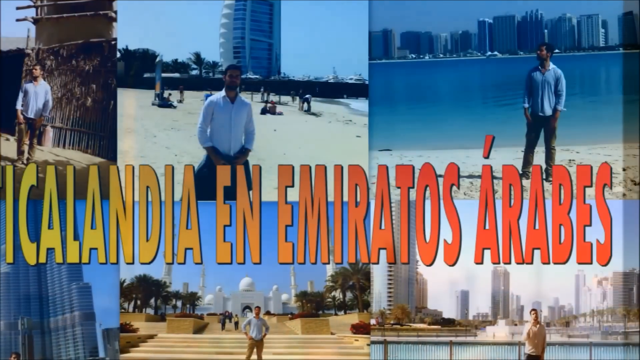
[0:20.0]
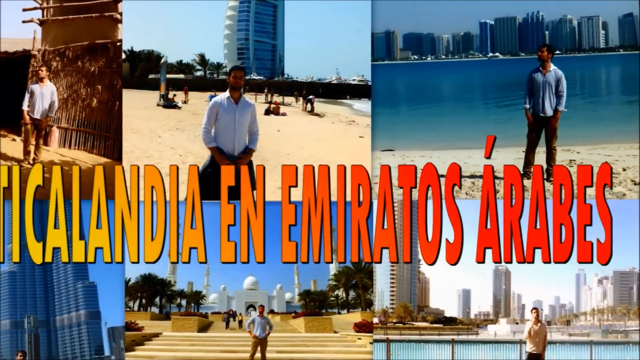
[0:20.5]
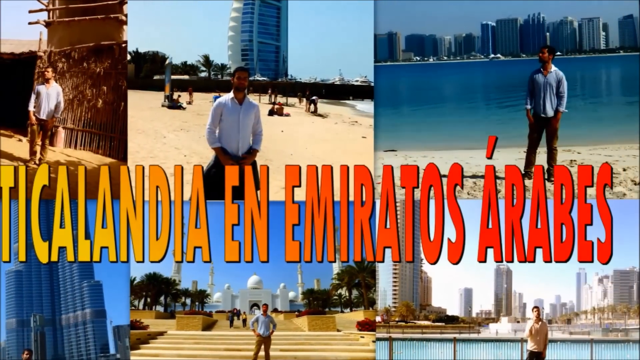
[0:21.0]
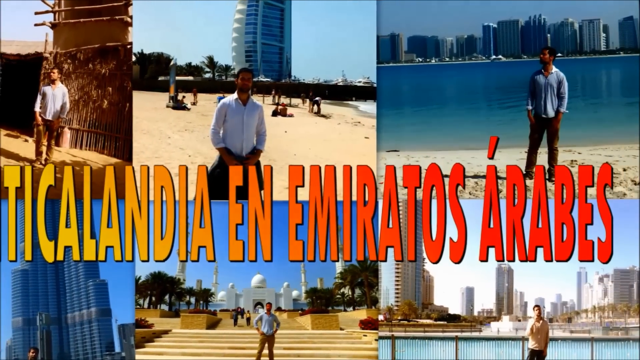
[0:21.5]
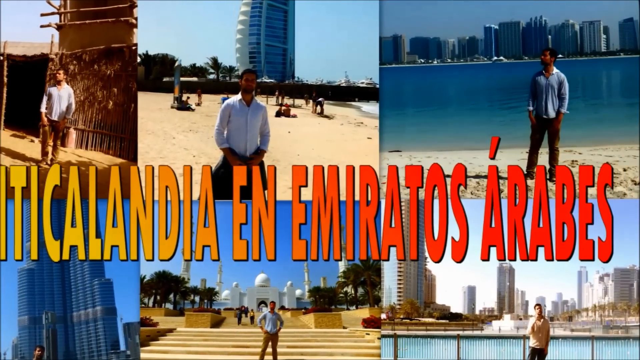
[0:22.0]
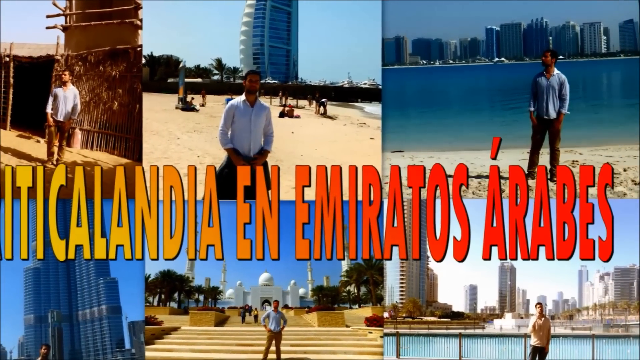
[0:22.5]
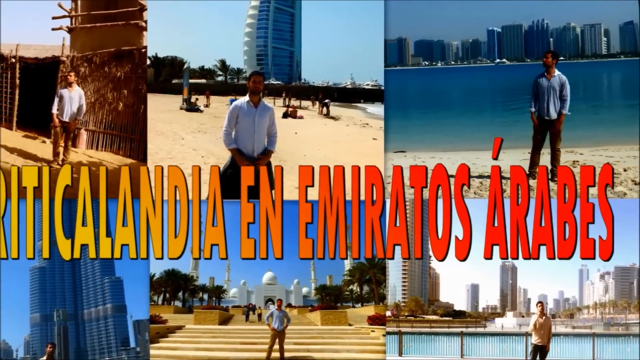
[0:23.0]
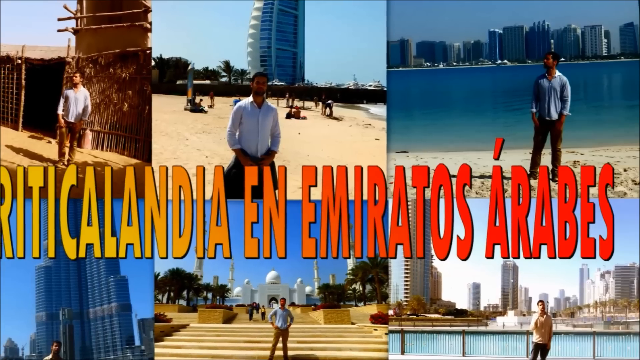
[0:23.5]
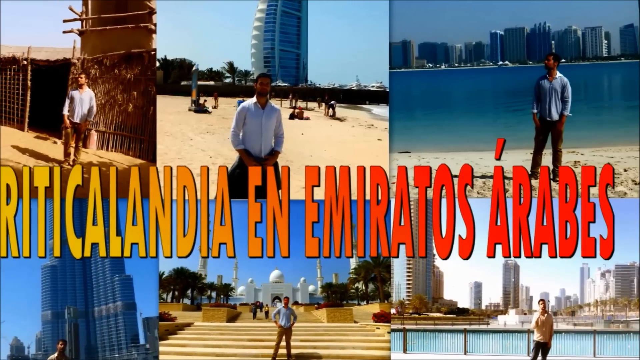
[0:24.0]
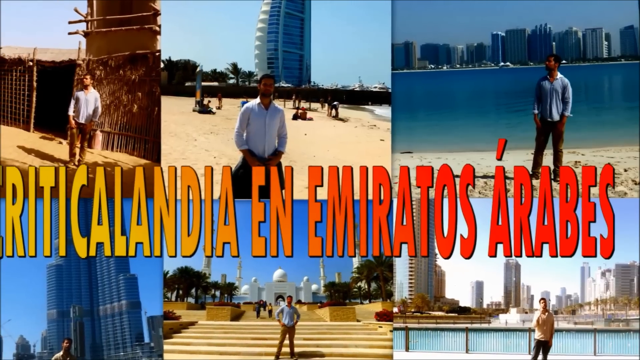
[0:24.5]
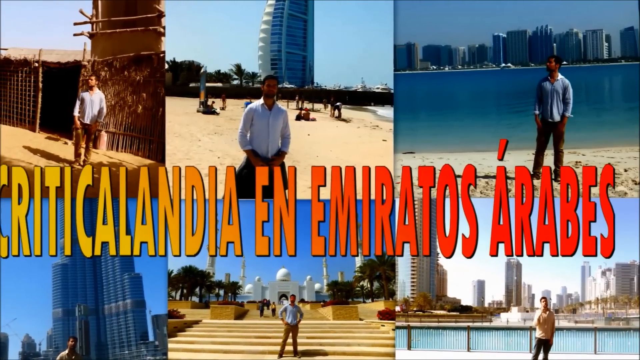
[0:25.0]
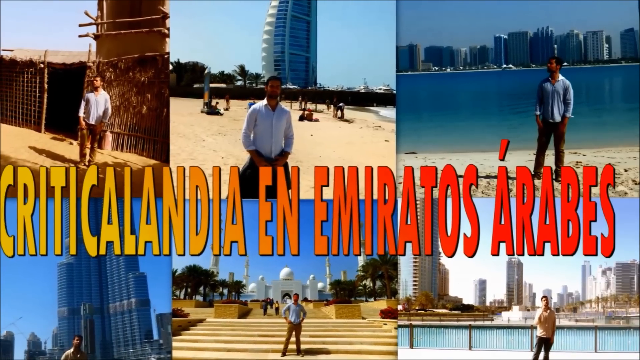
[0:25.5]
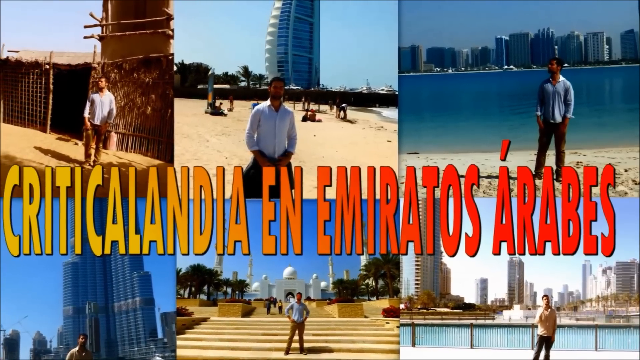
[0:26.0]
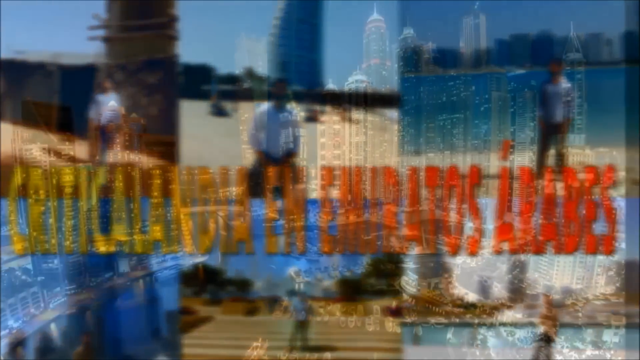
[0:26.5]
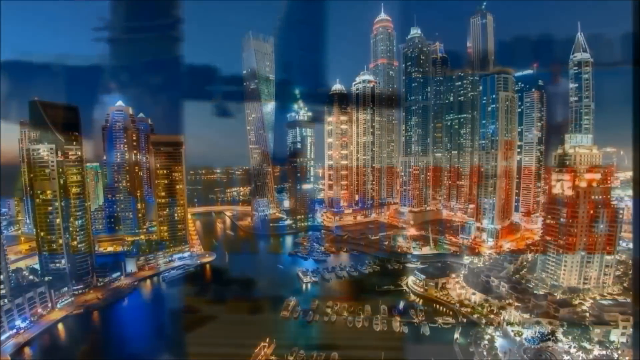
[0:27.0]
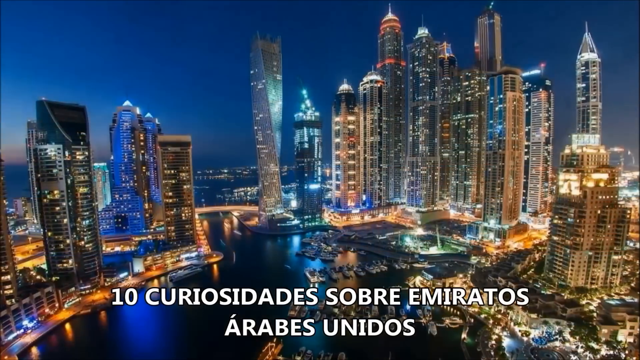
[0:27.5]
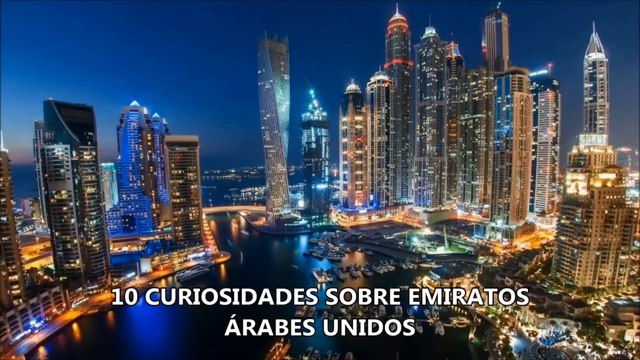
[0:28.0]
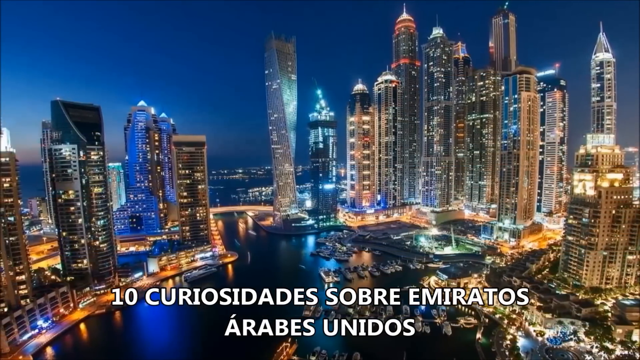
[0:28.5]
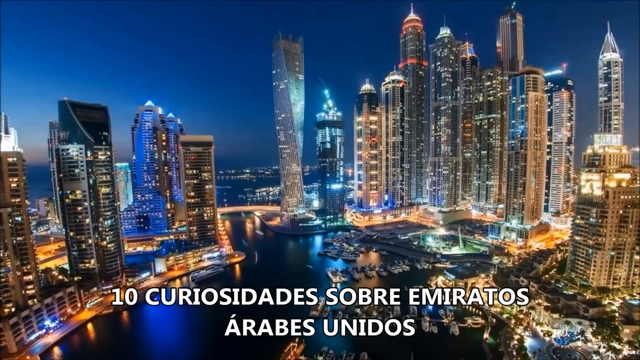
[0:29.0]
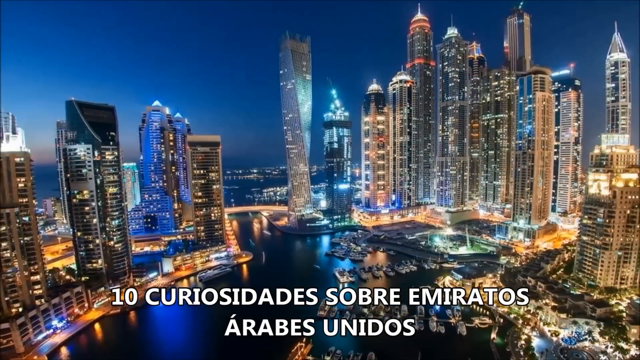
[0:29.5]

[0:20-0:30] A picture shows a man in front of various buildings in what looks like a city. In all the pictures he wears the same outfit: what looks like a white or blue long-sleeved button-down shirt and what looks like a pair of dark brown trousers. In most of the pictures he has his hands in his pockets or in front of the button of his pants. He seems to be Indian based on his skin tone, hair and face. The text in the video looks like Spanish and apparently indicates that the man is in the UAE and that the video covers 10 things that interested him there. Another picture of the city at night follows.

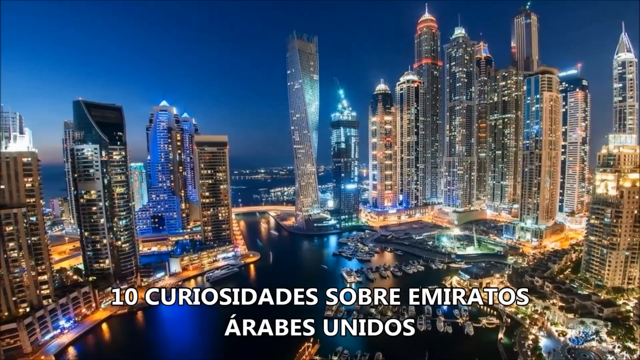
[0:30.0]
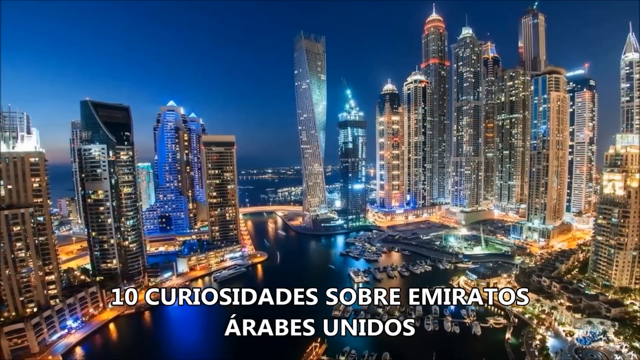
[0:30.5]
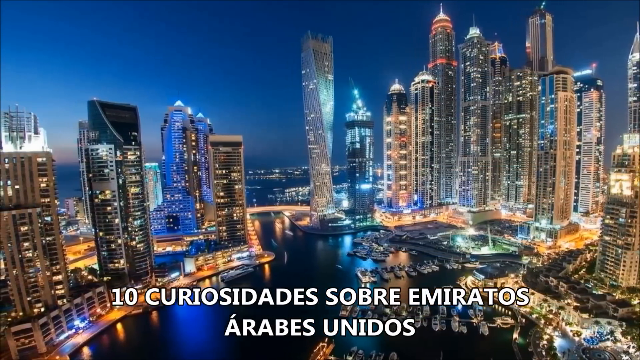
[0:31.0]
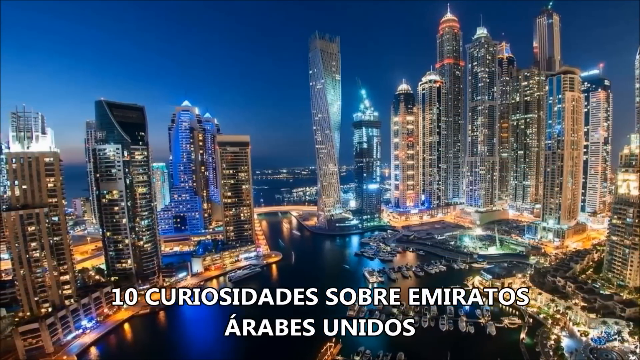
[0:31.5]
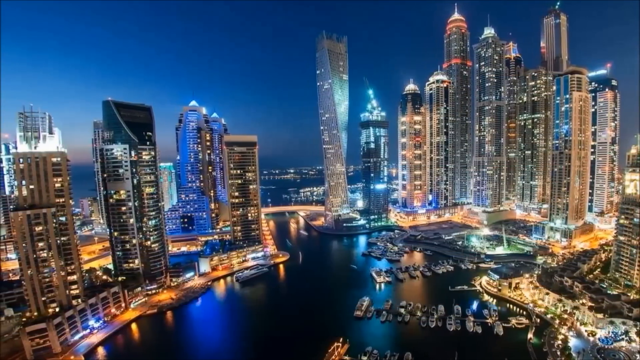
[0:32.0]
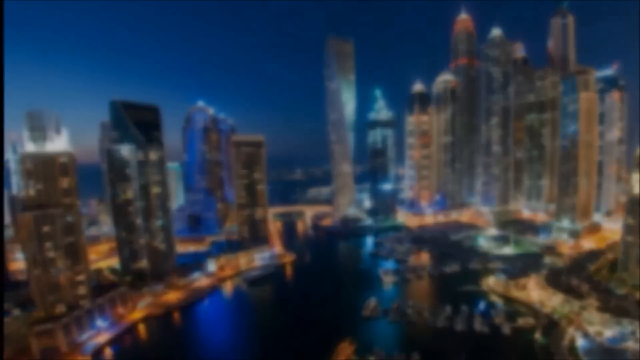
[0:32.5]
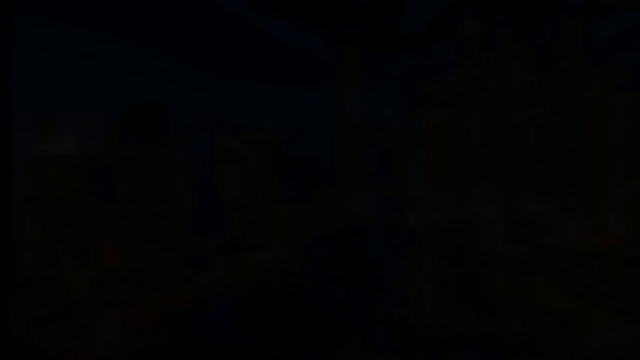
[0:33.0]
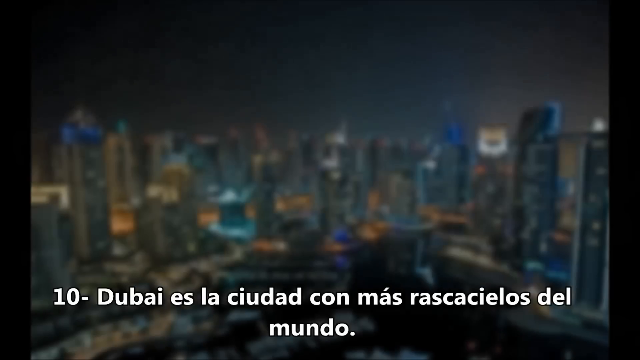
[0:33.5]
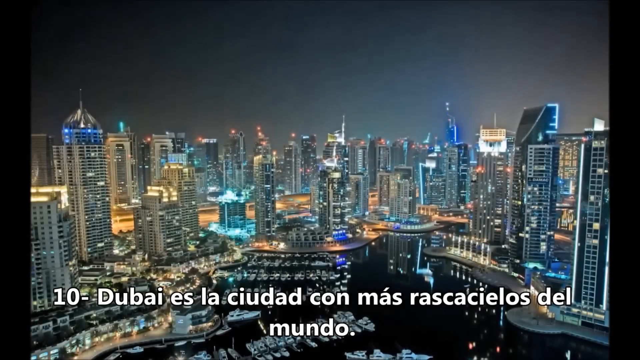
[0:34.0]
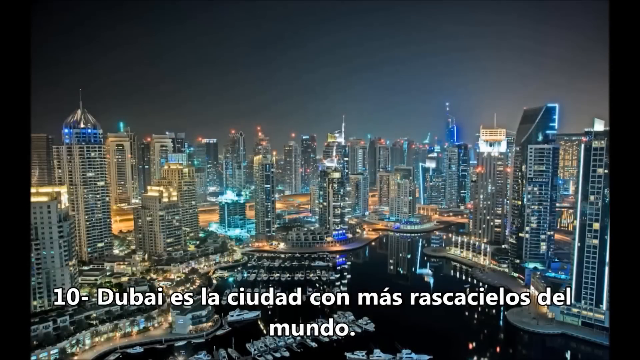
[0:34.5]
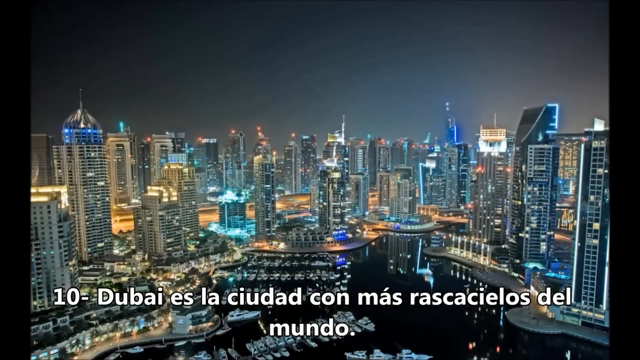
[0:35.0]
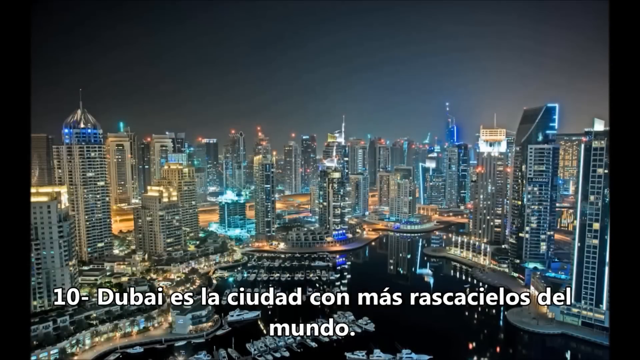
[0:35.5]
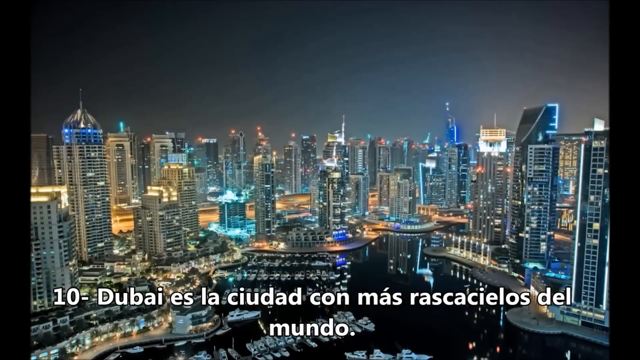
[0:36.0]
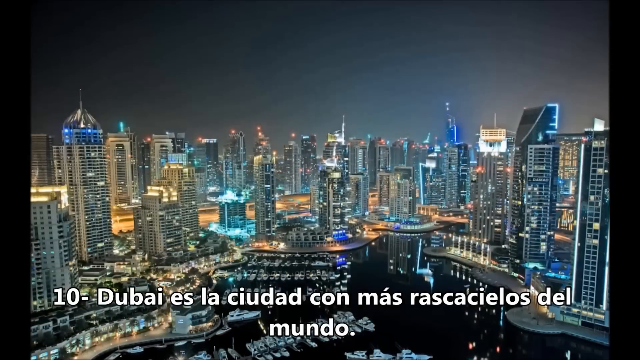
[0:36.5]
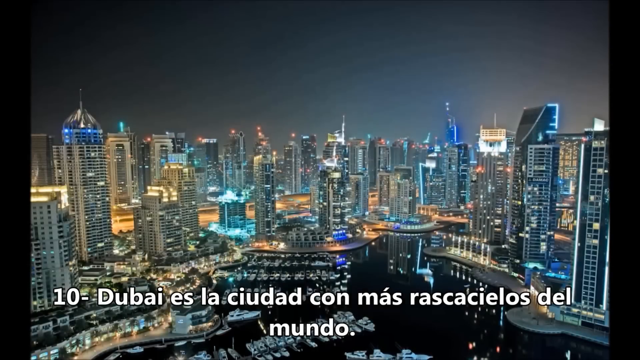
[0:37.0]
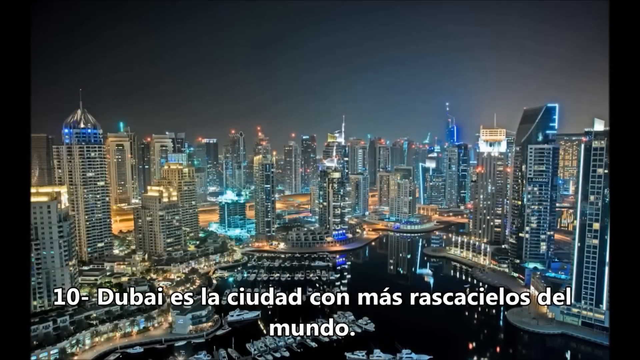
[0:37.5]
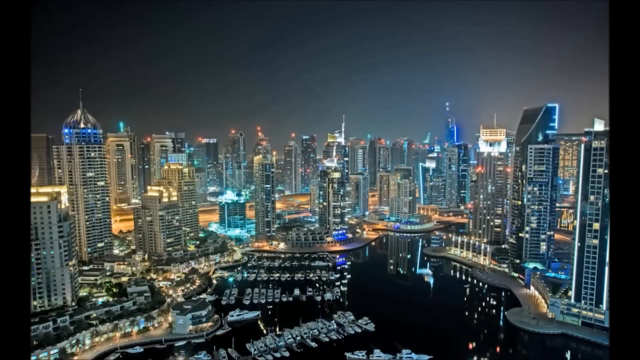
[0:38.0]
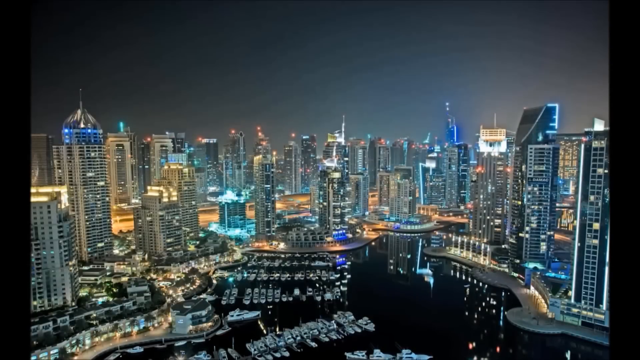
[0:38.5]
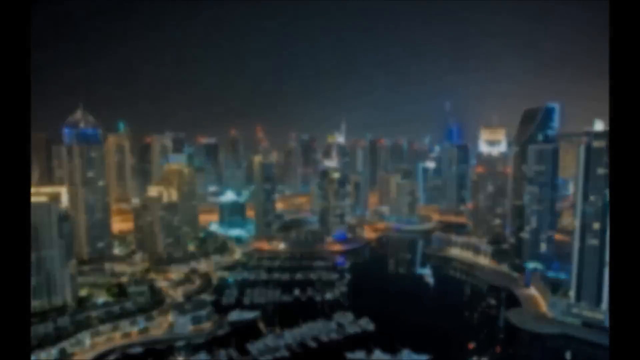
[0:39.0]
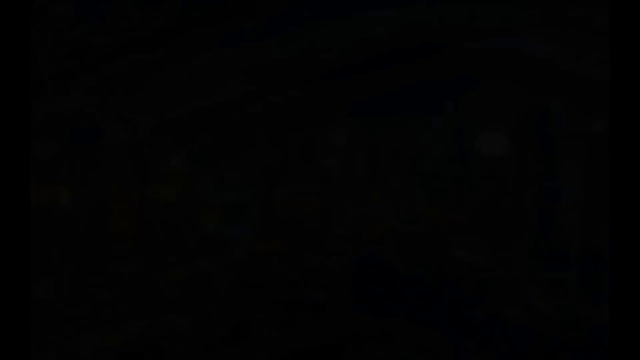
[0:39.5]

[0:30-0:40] A picture of the UAE at night shows skyscrapers lit up with what looks like lights inside and outside the buildings. The lights are a variety of colors, but most seem to be bright blue or dark blue. The city is surrounded by water, and boats are parked in the water outside the various skyscrapers and buildings. The video then transitions to the first item, labeled with a 10, about the city of Dubai, shown in a picture of the city at night.